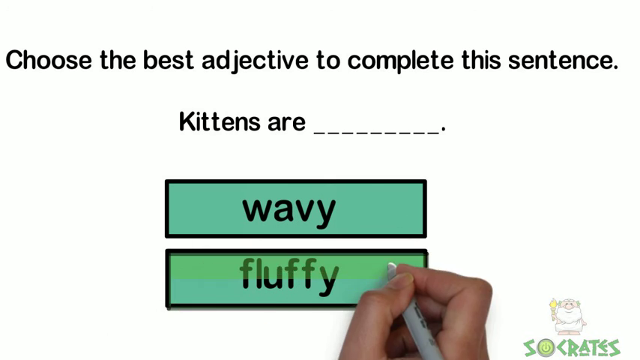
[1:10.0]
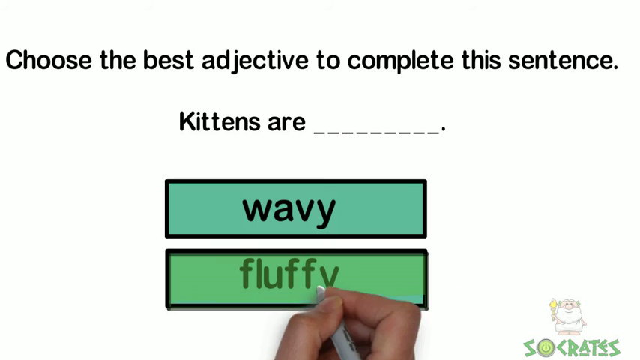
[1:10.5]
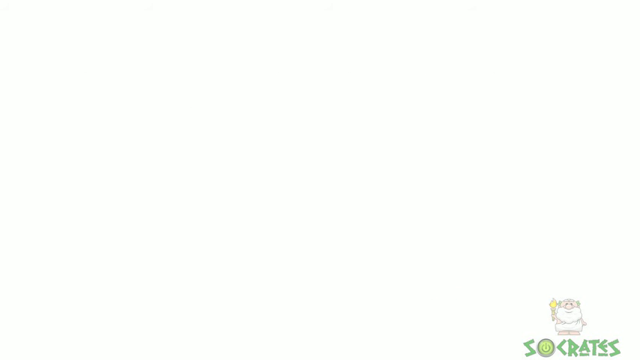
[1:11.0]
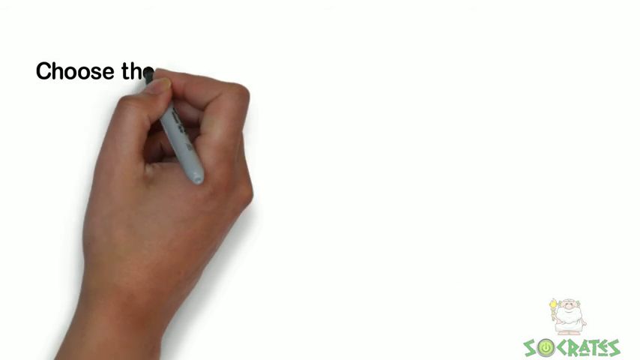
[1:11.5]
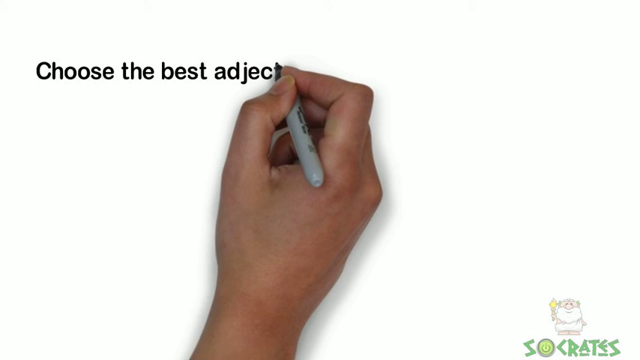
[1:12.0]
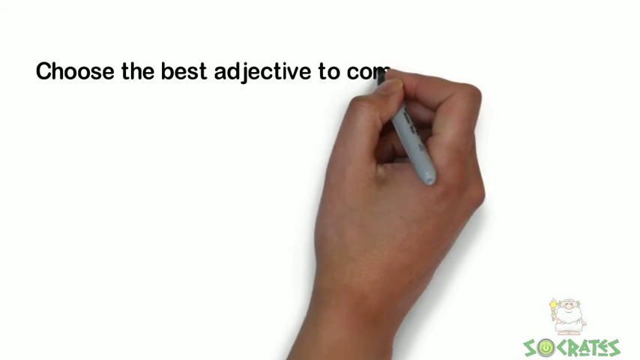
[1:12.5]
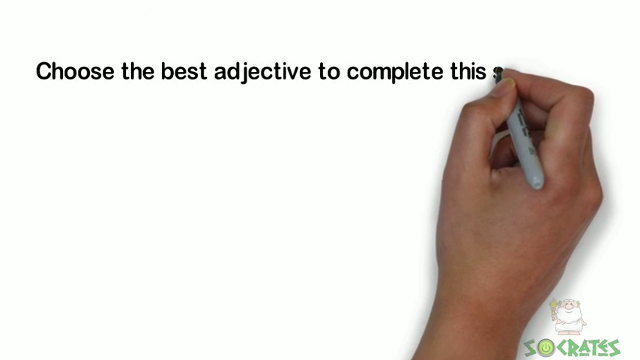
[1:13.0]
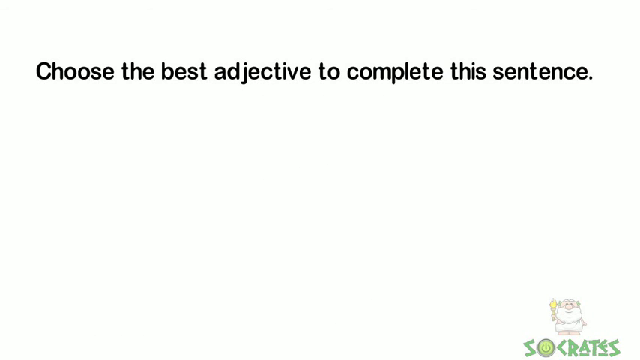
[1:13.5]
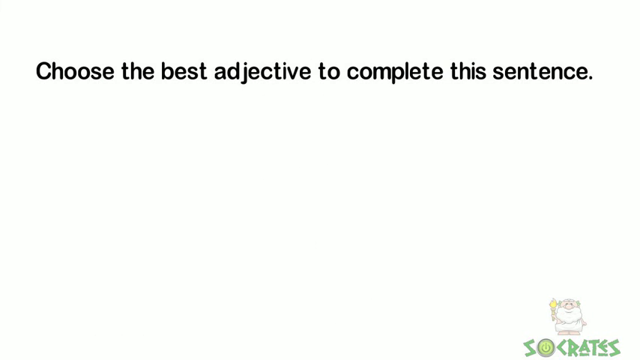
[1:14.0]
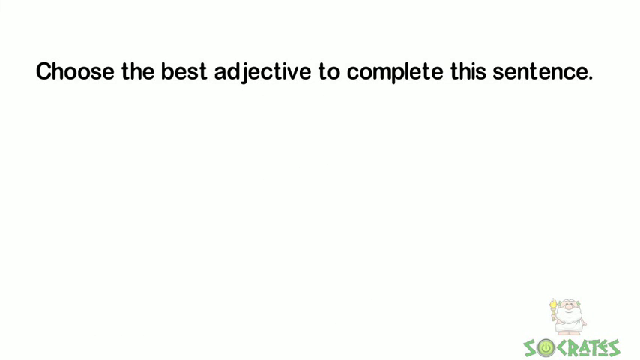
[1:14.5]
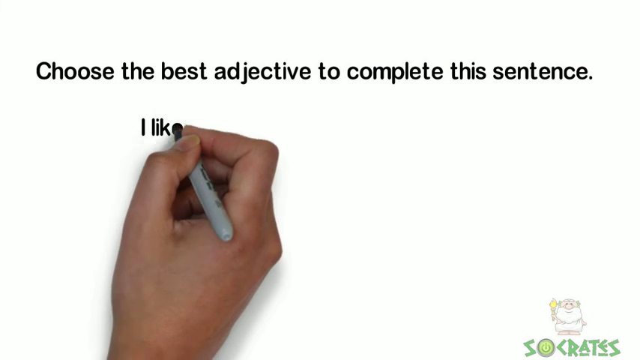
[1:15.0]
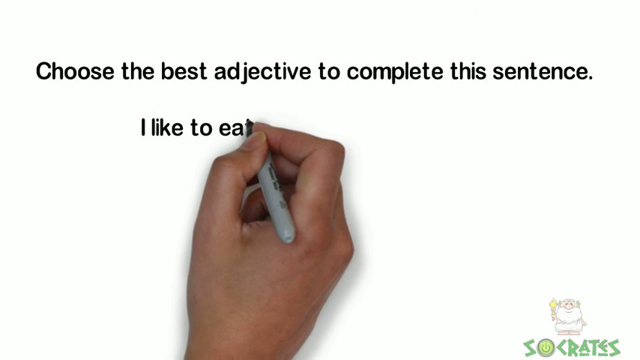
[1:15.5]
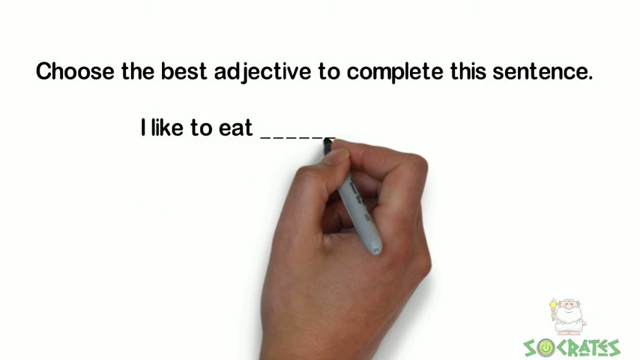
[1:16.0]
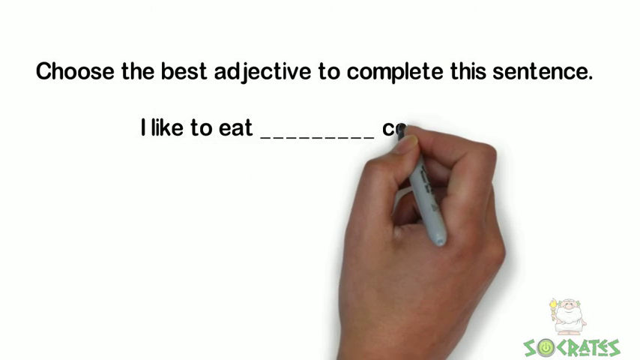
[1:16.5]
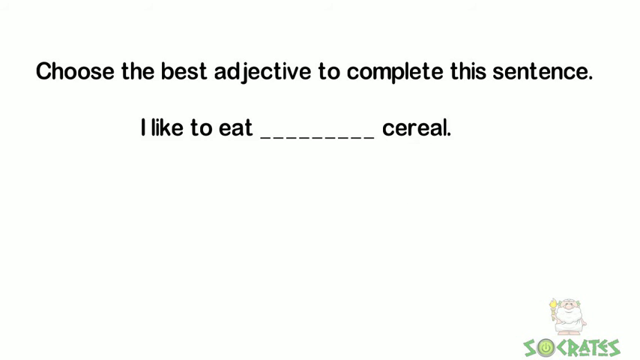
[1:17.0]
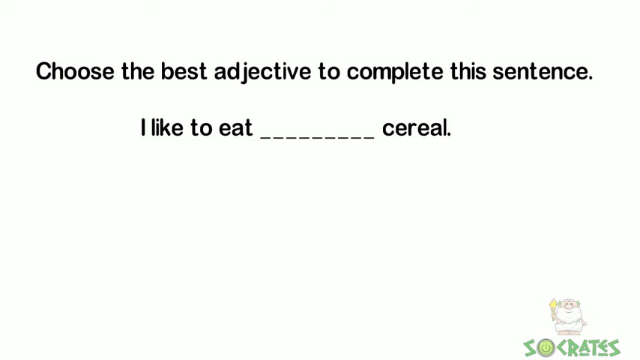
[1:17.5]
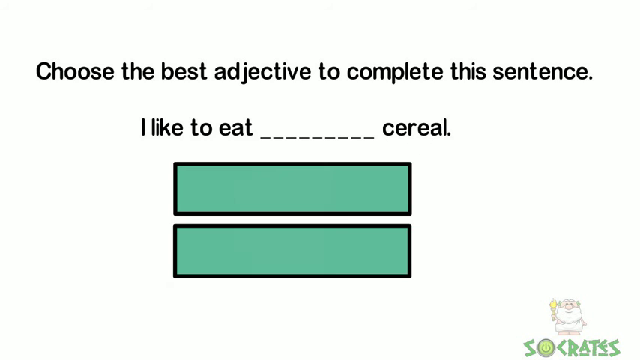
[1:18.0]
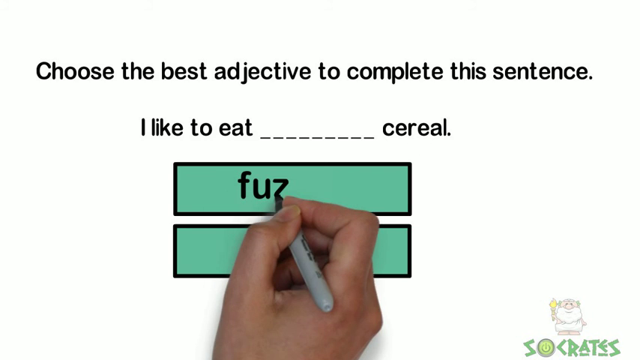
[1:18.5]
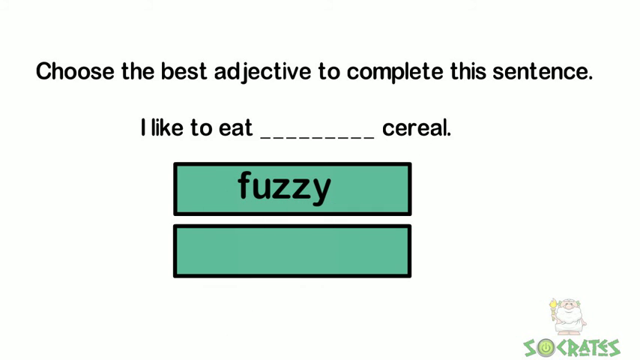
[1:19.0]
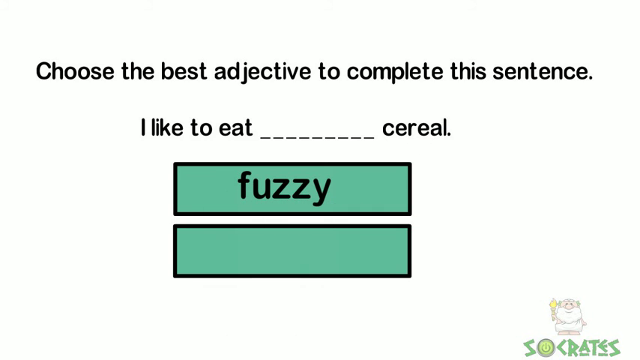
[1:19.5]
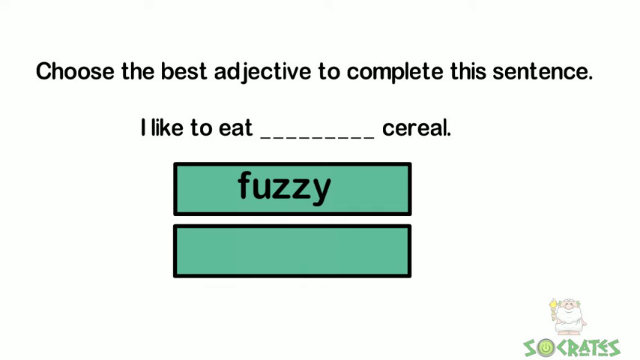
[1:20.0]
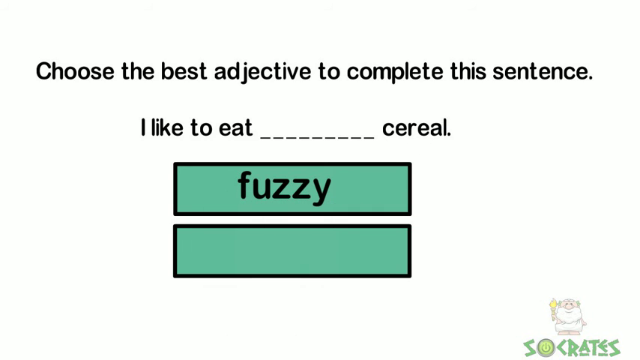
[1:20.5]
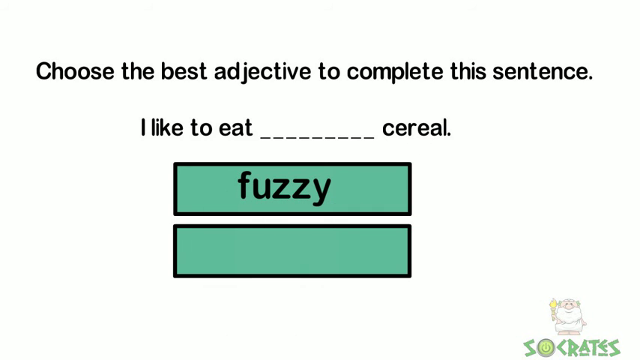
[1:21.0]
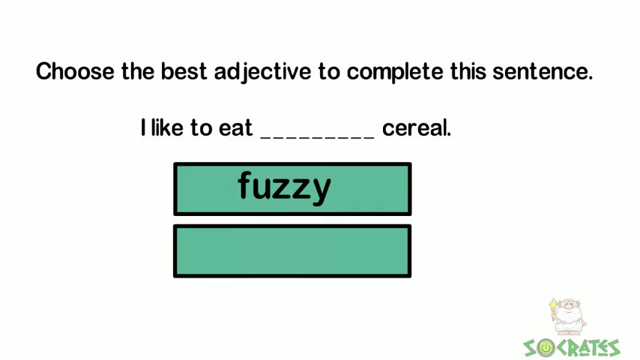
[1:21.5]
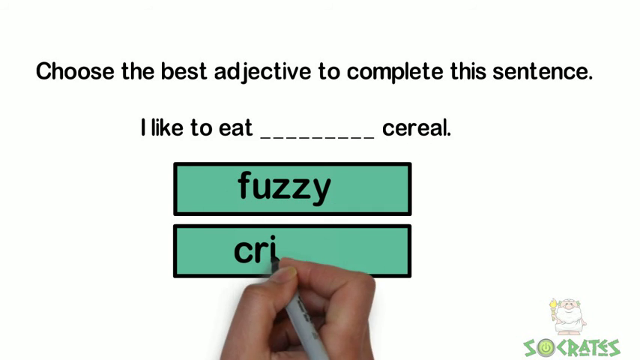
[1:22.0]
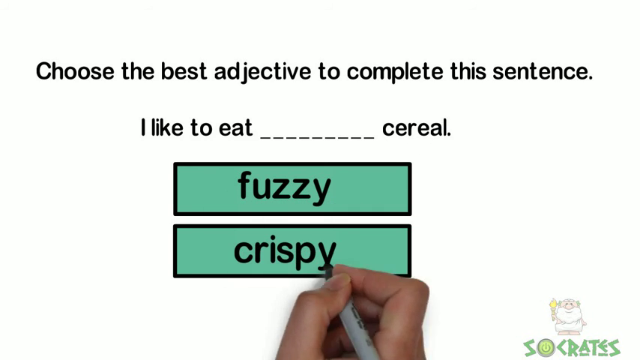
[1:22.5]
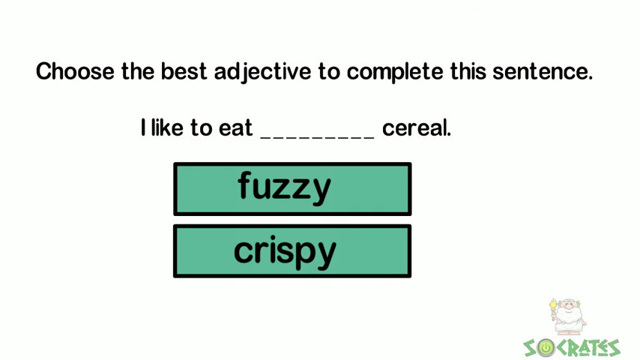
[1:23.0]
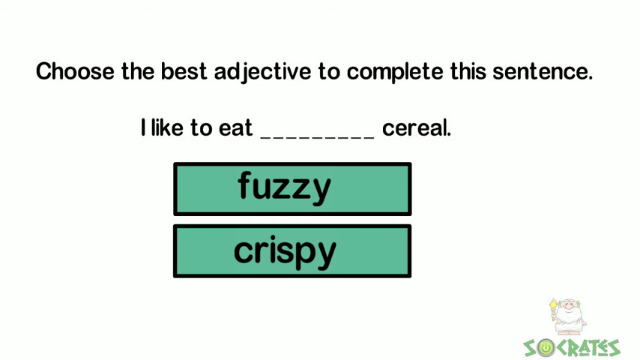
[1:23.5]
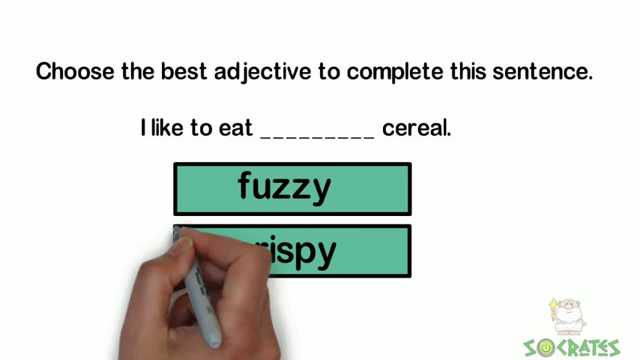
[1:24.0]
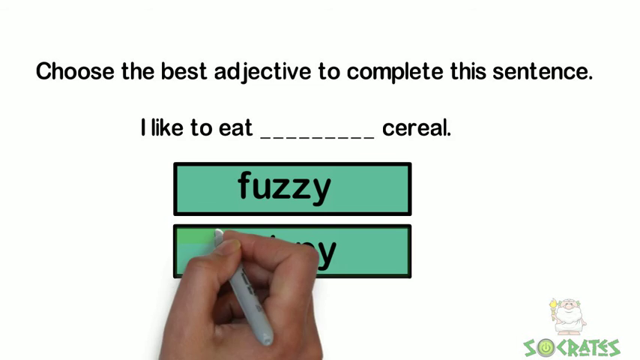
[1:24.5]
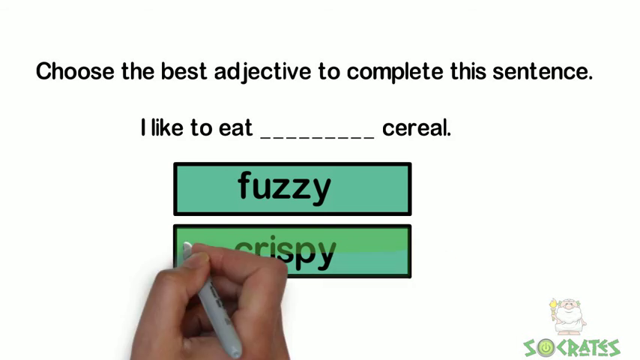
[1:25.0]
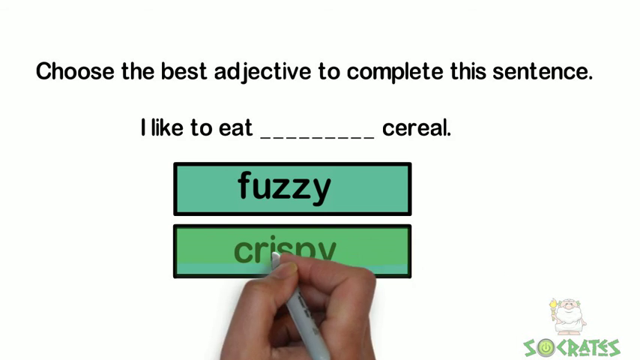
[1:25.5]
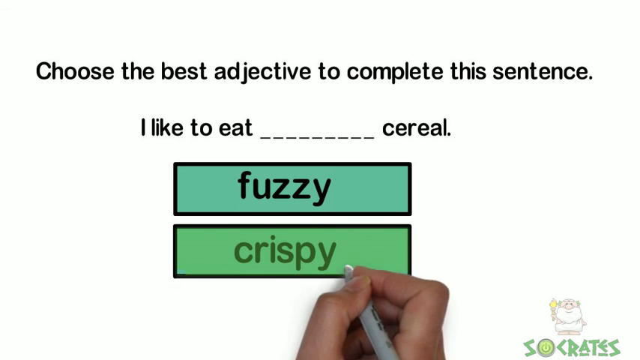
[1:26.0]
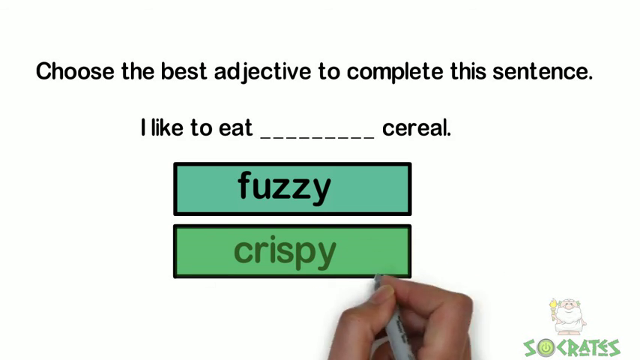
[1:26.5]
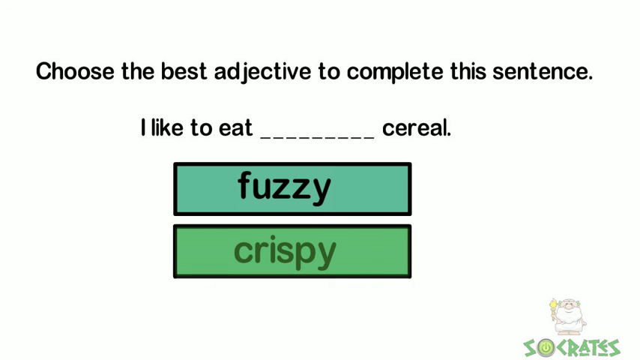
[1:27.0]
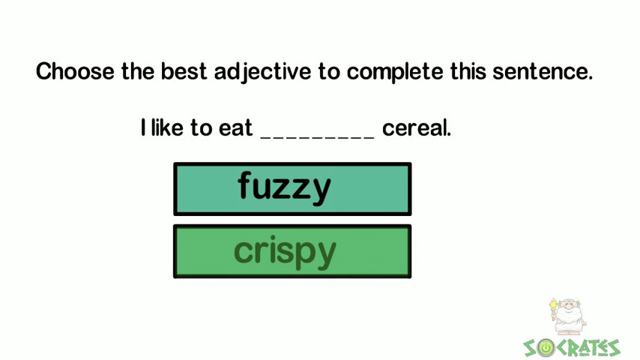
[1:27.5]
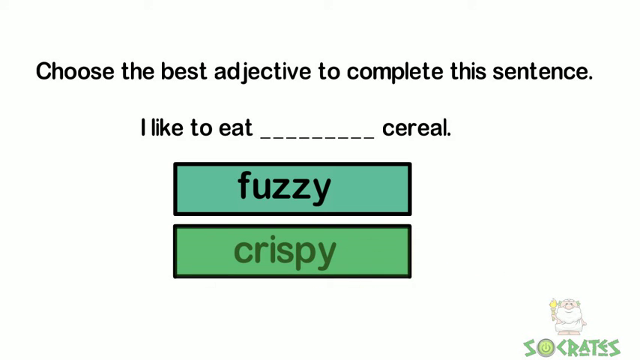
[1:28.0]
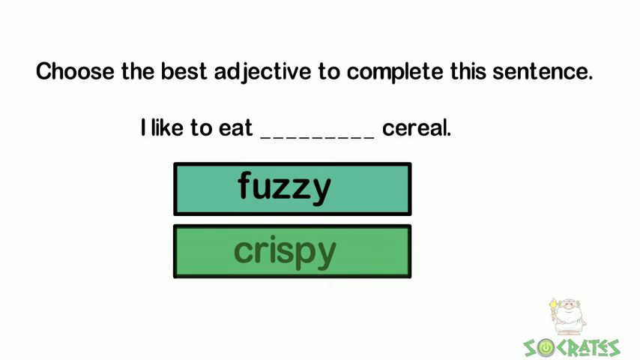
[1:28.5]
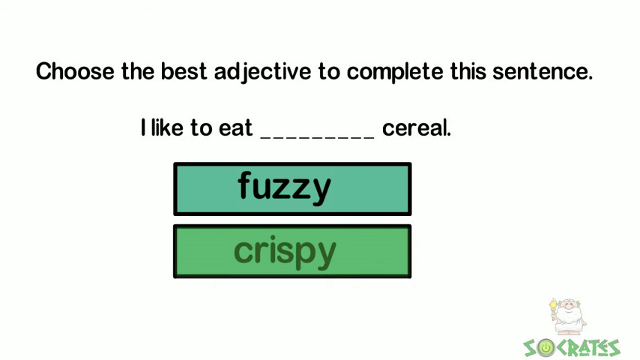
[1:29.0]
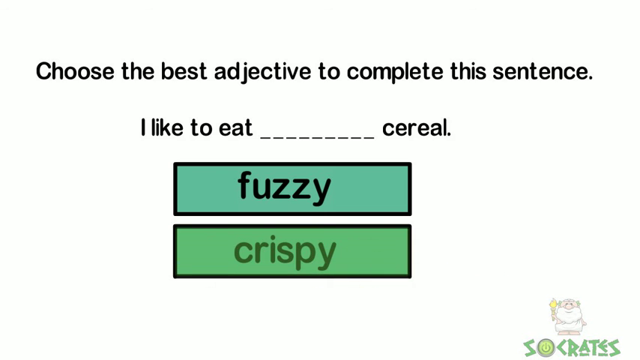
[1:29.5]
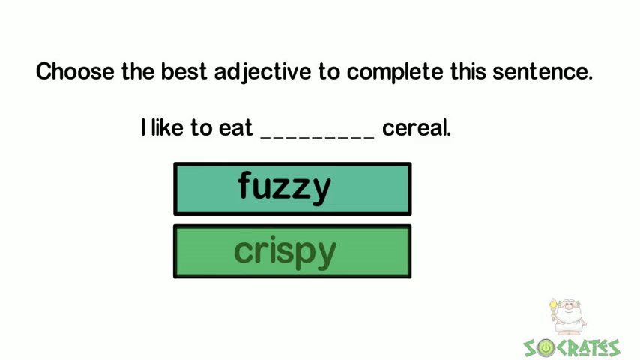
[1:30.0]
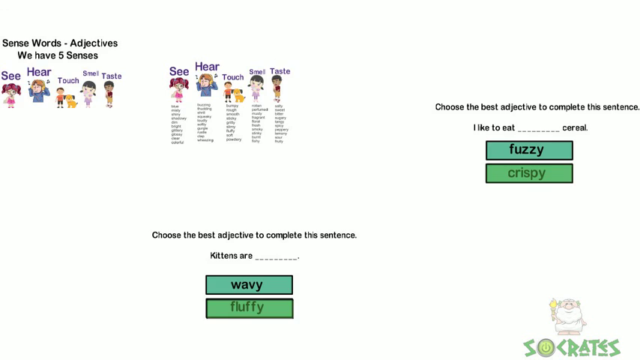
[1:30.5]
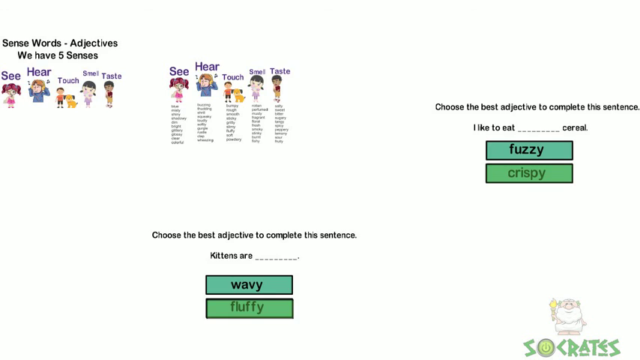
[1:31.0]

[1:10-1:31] The hand holding a gray marker keeps writing, and the writing comes out in black: "choose the best adjective to complete this sentence." Below it is written "I like to eat ------- cereal." Underneath are two green rectangular boxes with black borders; the first reads "fuzzy" and the bottom one "crispy". A yellow border then goes around "crispy", which seems to be the right word. The full view then shows the first picture at the top with the words "see", "hear", "touch", "smell" and "taste" and the images with words written below them; on the right side are the two green boxes reading "fuzzy" and "crispy"; and at the bottom center there is also a question with two boxes reading "wavy" and "fluffy".